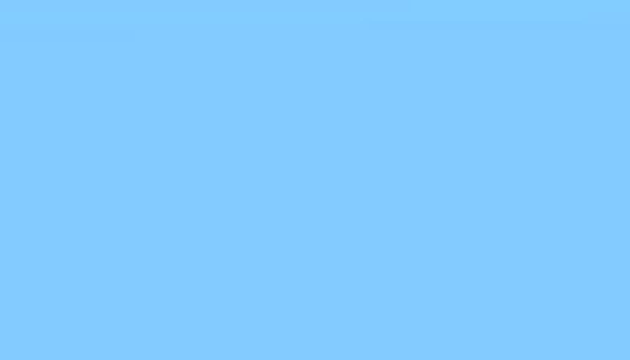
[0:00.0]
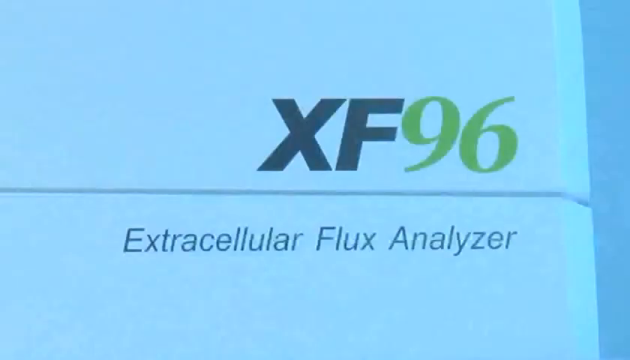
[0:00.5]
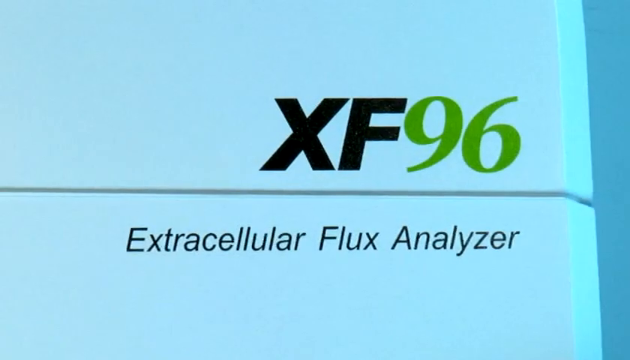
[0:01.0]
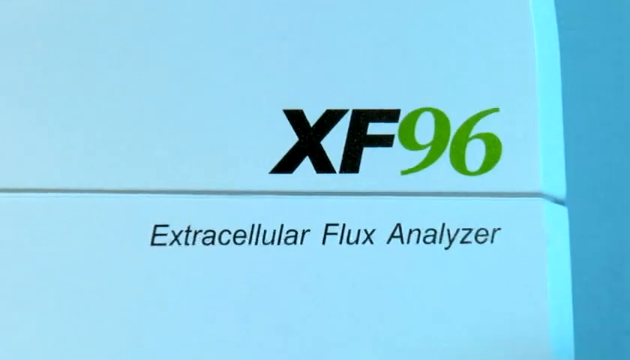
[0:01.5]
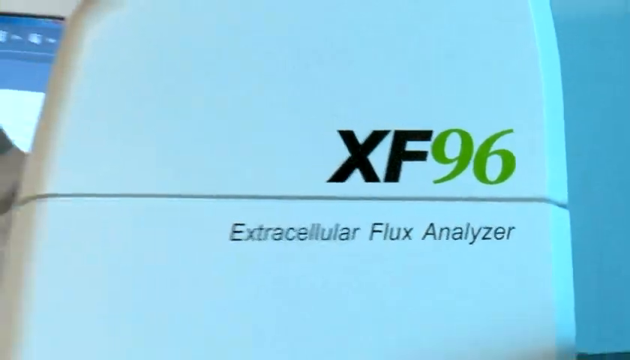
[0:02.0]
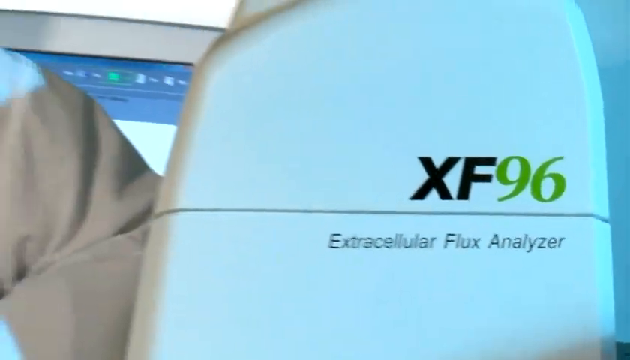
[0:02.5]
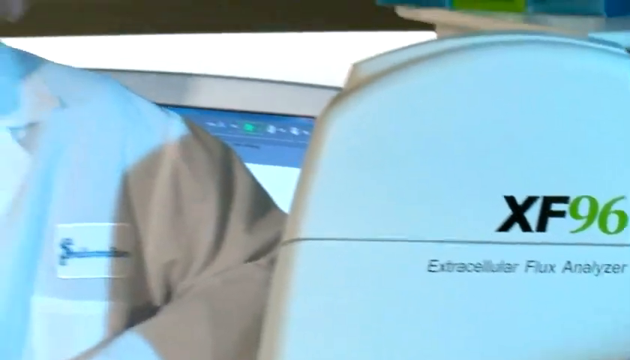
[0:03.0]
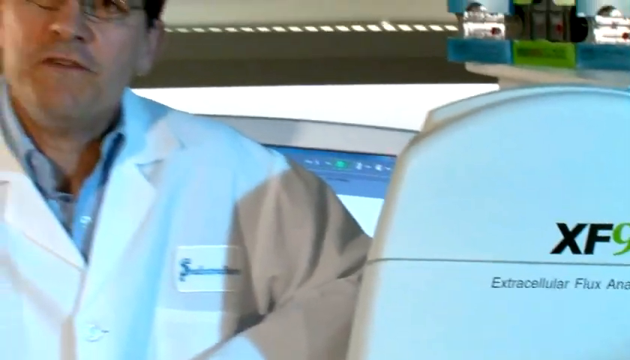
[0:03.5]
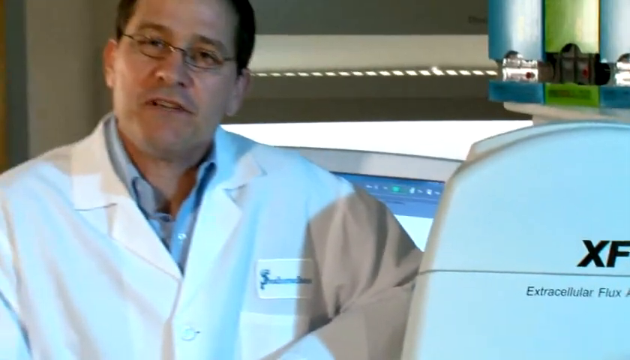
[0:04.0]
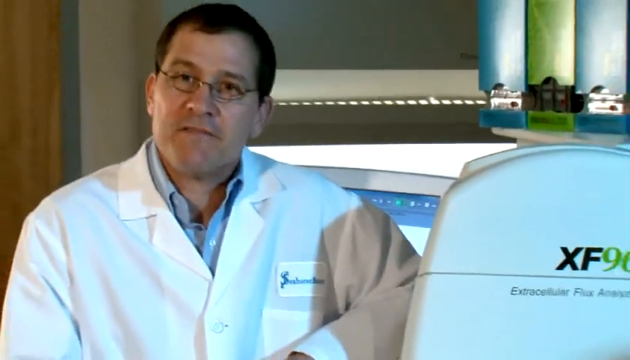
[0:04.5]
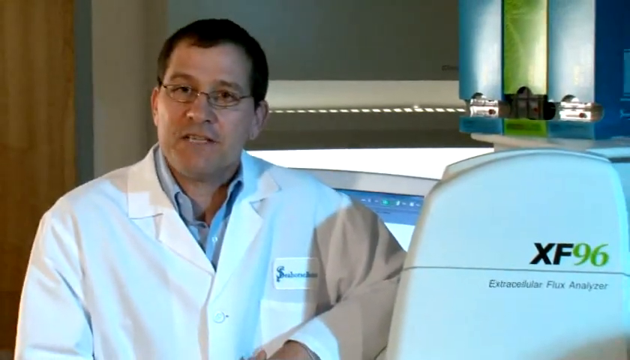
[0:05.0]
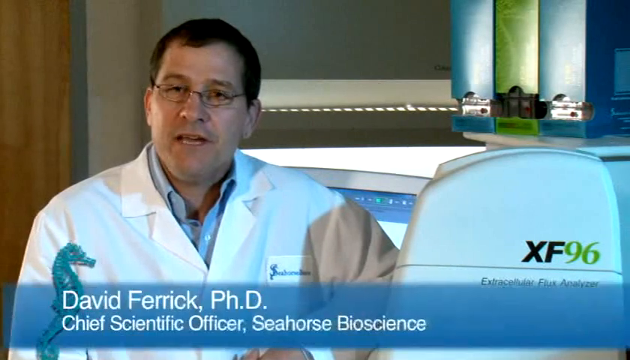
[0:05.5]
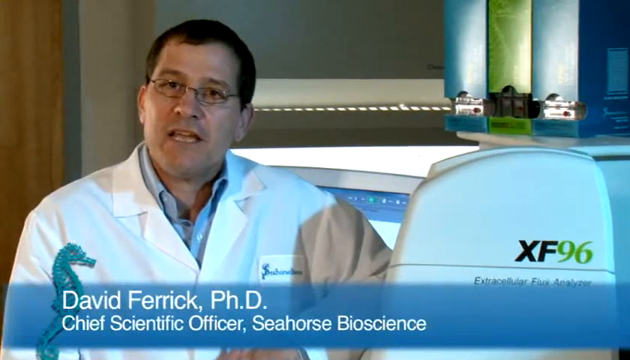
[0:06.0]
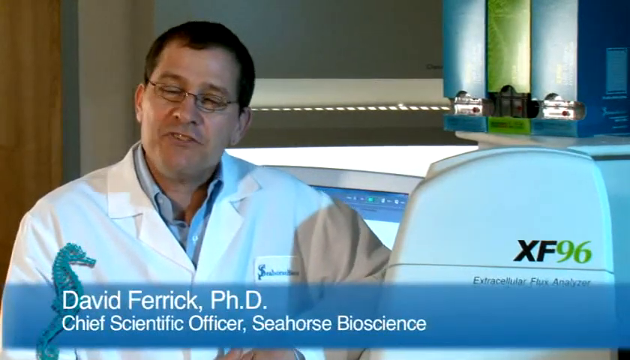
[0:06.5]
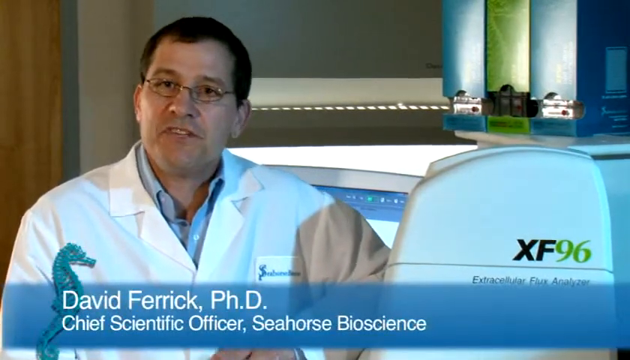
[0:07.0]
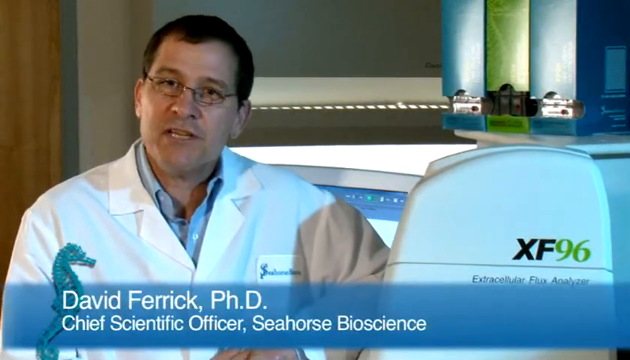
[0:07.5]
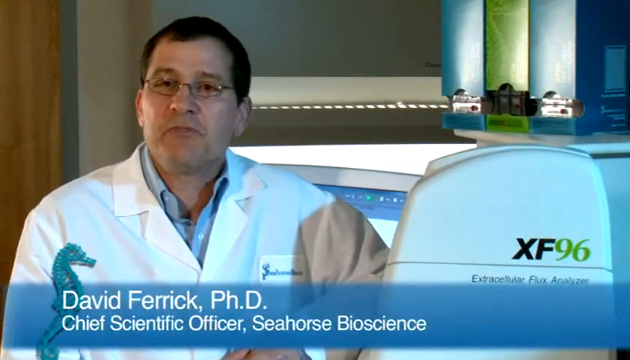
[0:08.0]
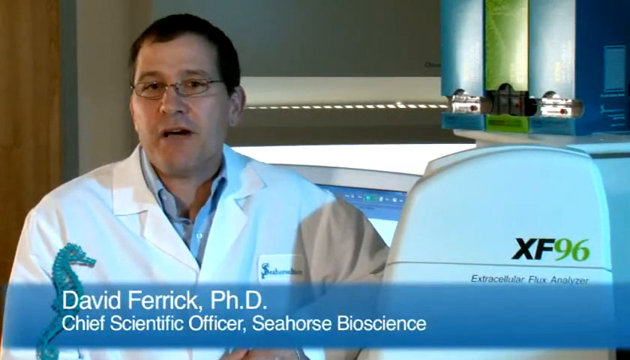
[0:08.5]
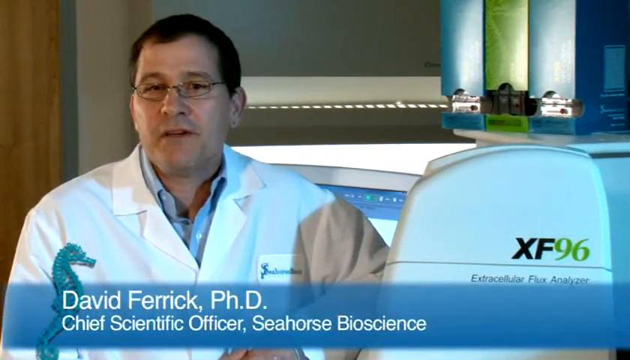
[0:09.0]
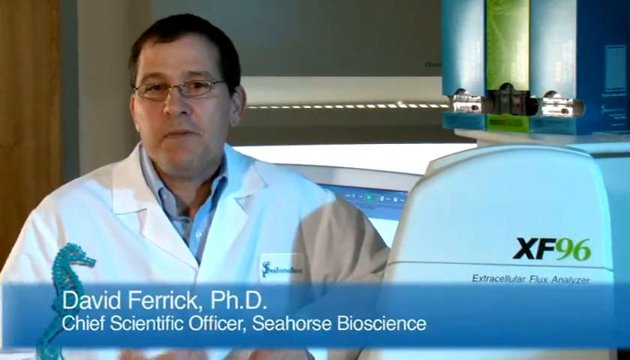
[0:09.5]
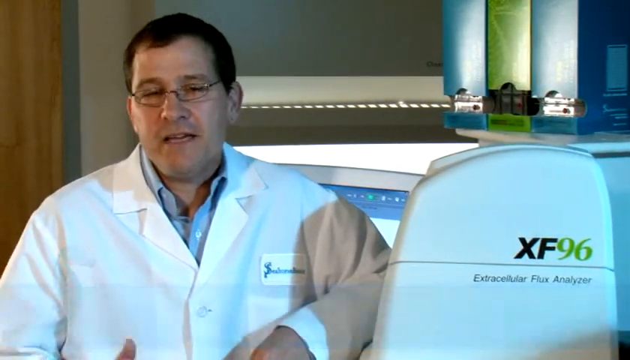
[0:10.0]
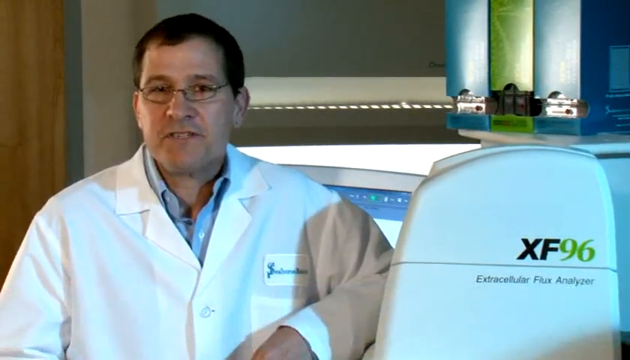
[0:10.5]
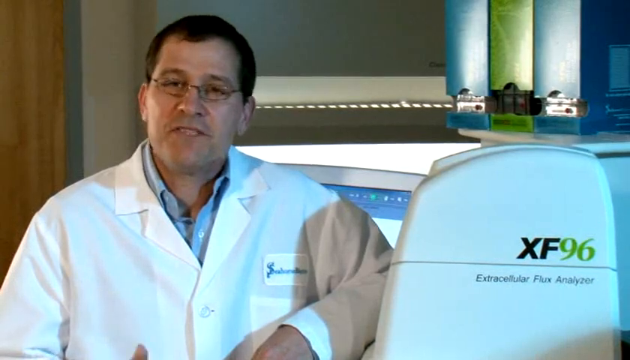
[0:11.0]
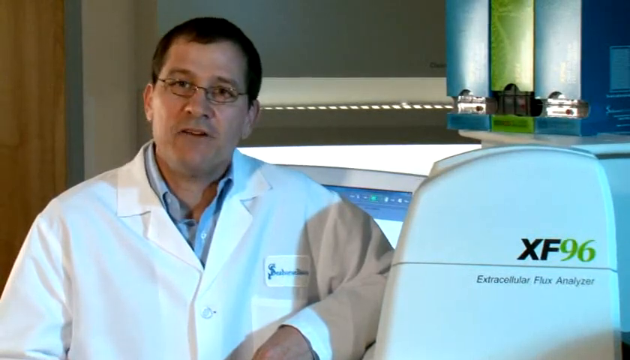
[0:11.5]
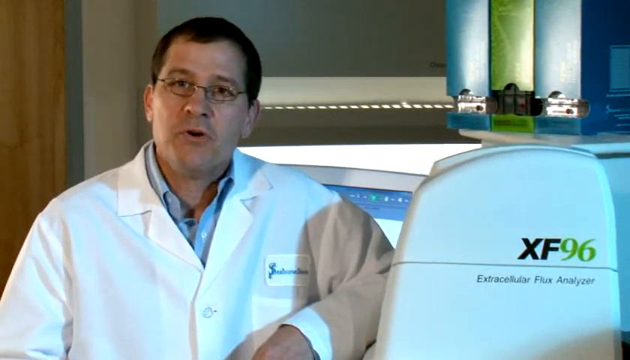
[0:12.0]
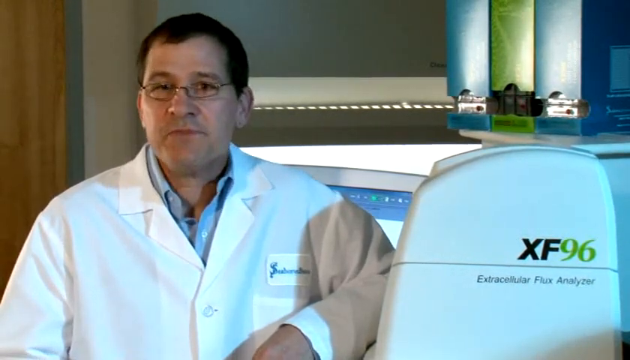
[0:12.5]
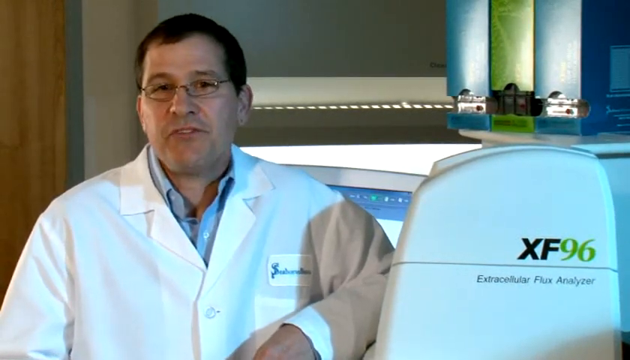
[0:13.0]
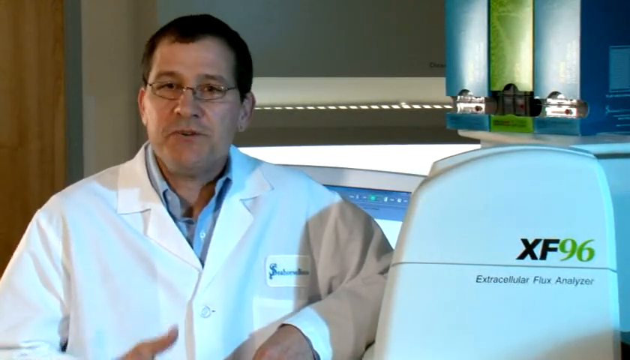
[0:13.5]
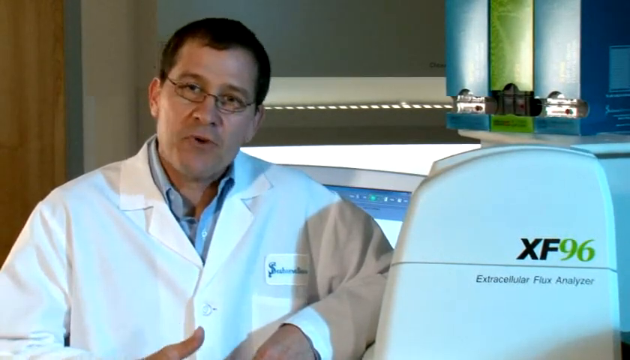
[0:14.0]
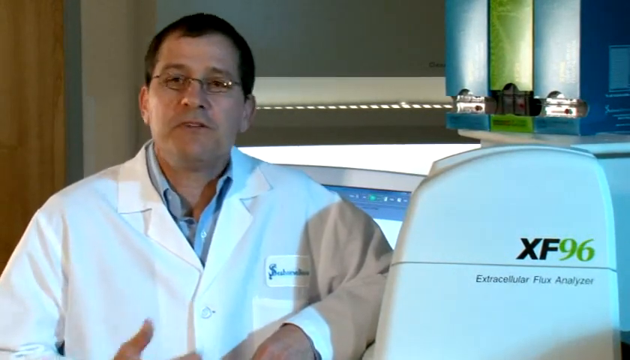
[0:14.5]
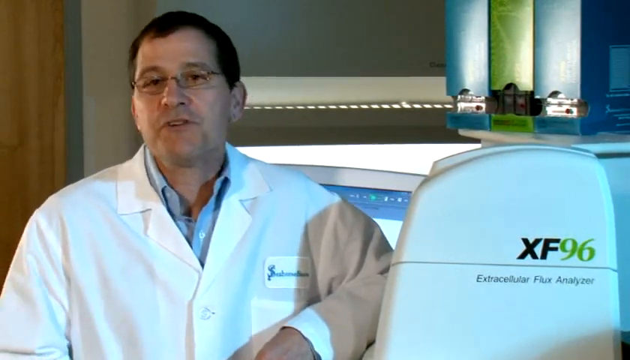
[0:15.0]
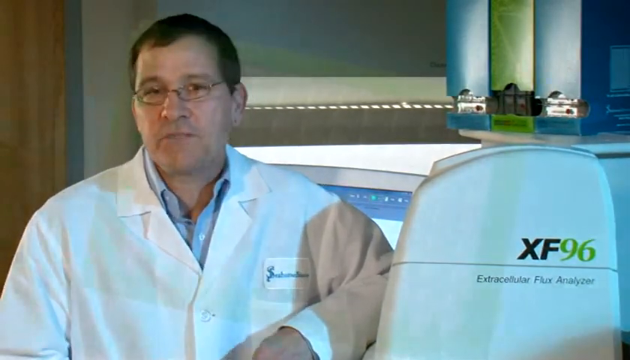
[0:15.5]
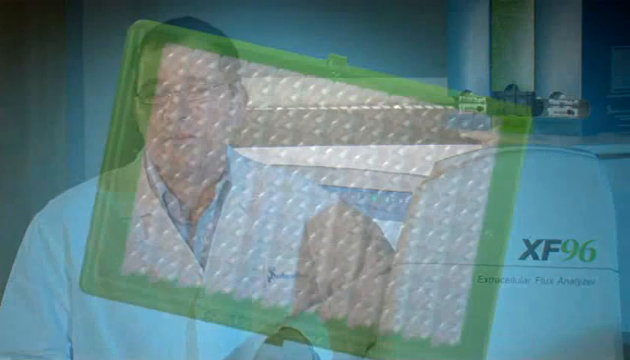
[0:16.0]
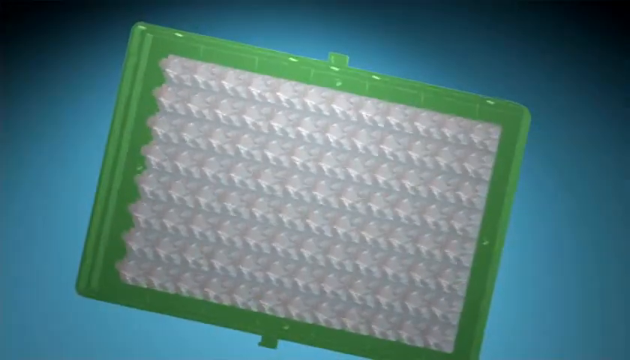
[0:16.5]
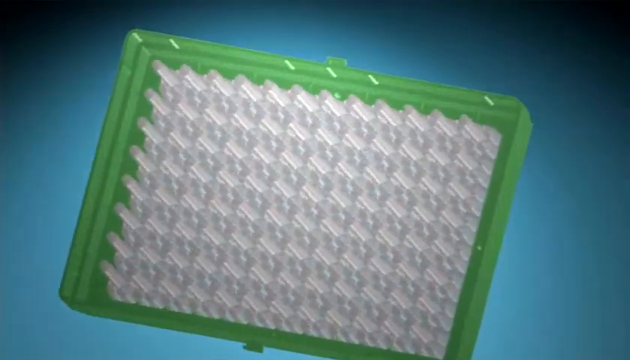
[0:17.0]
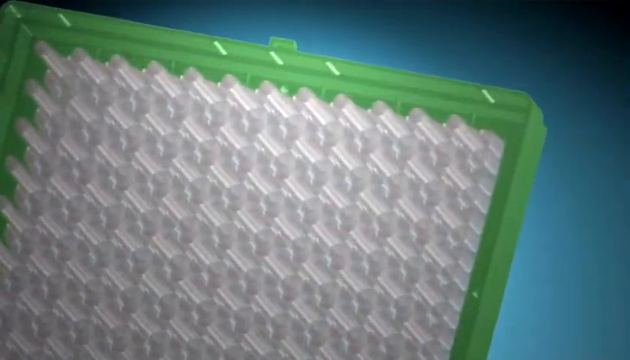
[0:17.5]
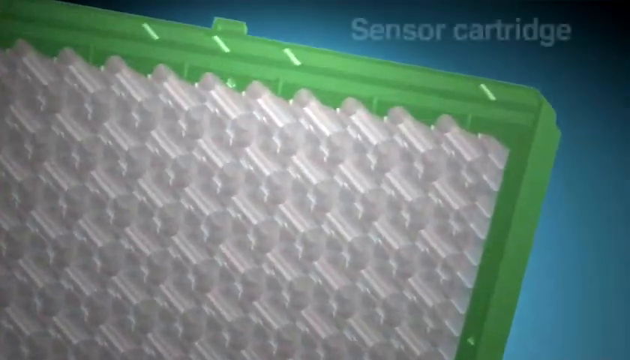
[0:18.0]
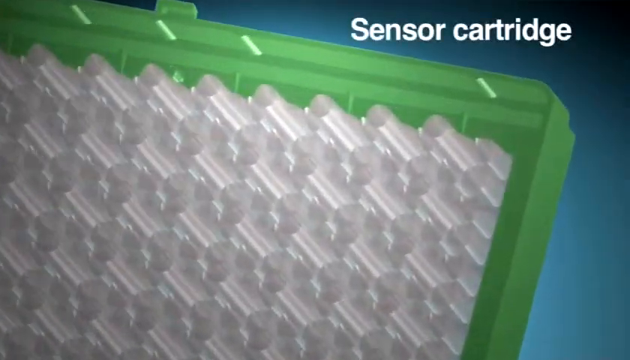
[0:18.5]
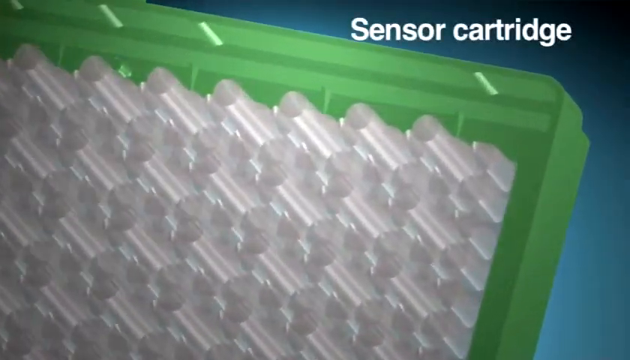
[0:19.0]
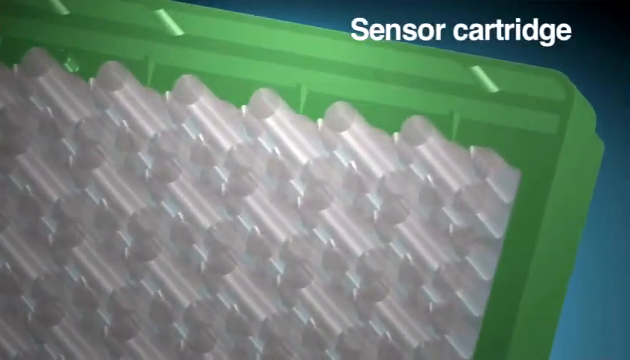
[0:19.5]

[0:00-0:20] Very large text at the top right and middle reads "XF 96", with the "96" in green, and below it reads "extracellular flux analyzer". The video zooms out, revealing that the text is on the side of a machine that looks like an oval white machine. To the left of it a man sits with his left elbow propped up on the machine. He wears a white lab coat over a blue shirt, appears to have short black hair, wears glasses, and faces directly toward the viewer while talking. A light blue banner appears at the bottom, with a picture of a blue seahorse facing right at the bottom left, and white text appears reading "David Farrick PhD Chief Scientific Officer Seahorse Bioscience". Over his left chest there looks like a white tag with black text that probably says seahorse. As he talks, he waves his right hand a little in front of him near the bottom of the frame. The video then transitions to what looks like a 3D animation or diagram of what looks like a rectangular green tool holding a bunch of little white cylinders. The video zooms into the top right corner, white text at the top right reads "sensor cartridge", and it zooms into one of the cylinders.